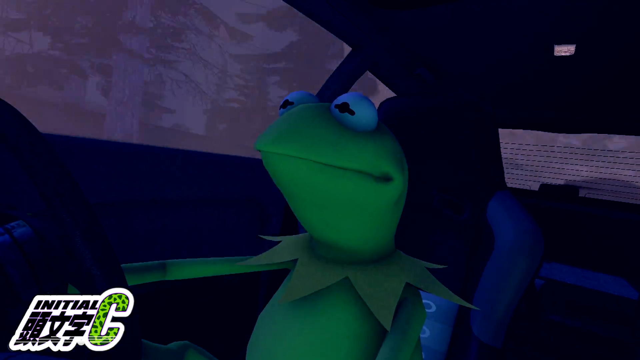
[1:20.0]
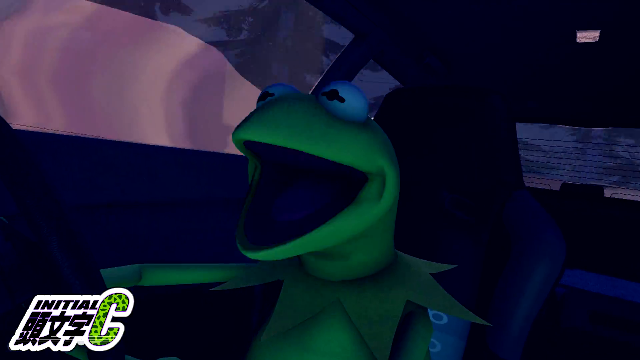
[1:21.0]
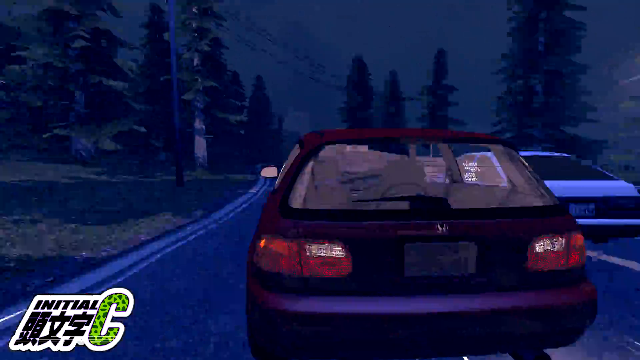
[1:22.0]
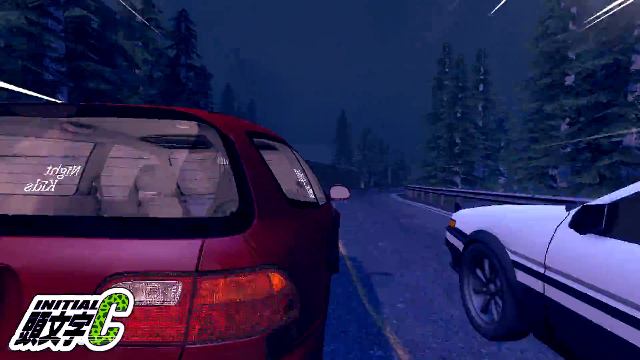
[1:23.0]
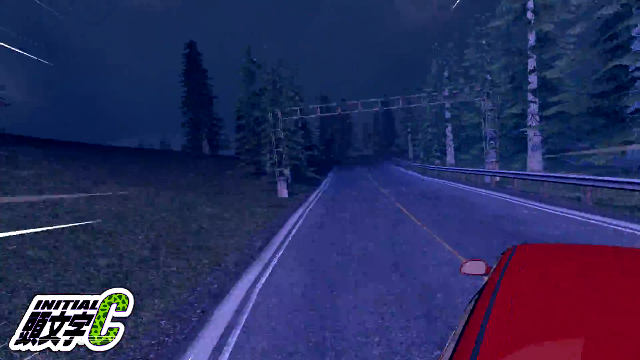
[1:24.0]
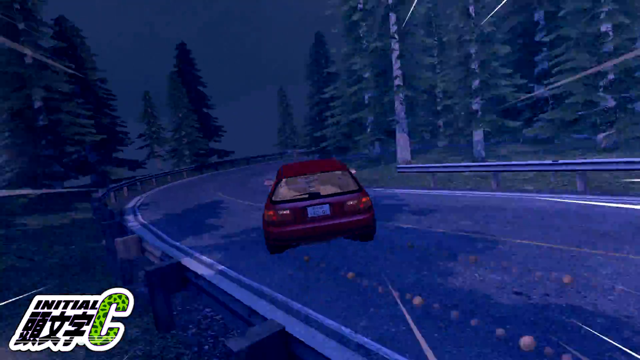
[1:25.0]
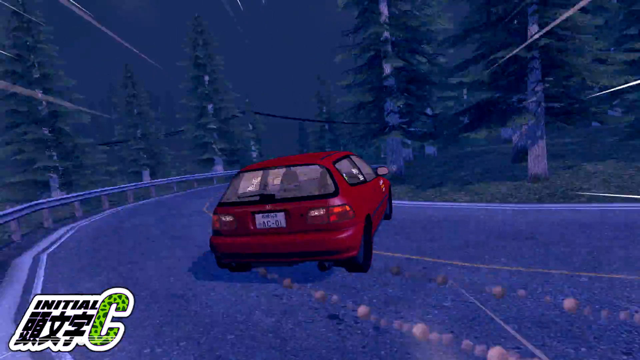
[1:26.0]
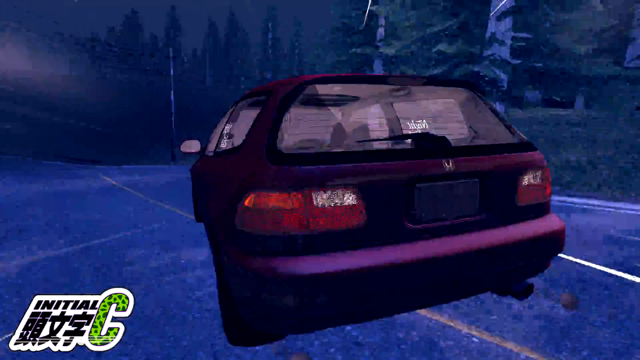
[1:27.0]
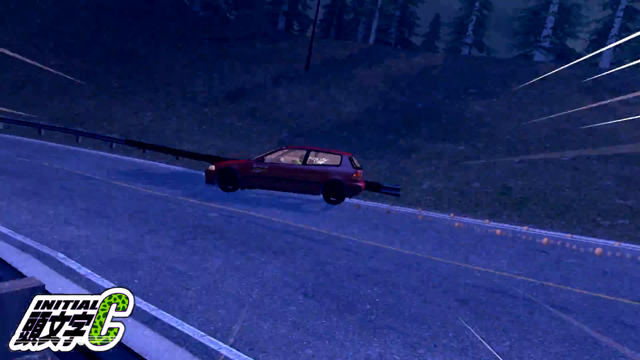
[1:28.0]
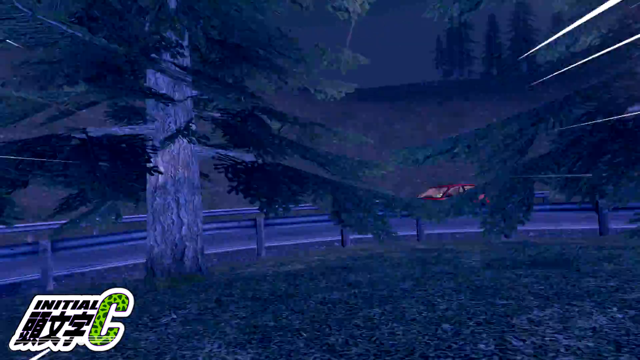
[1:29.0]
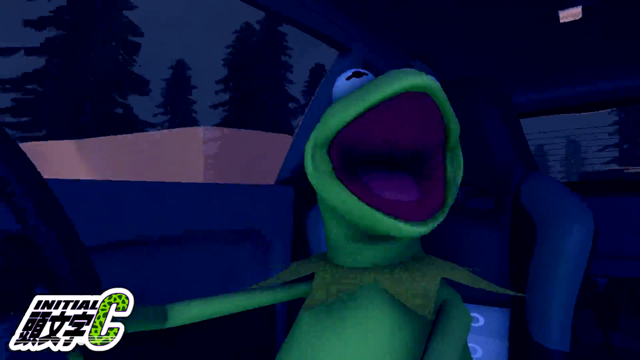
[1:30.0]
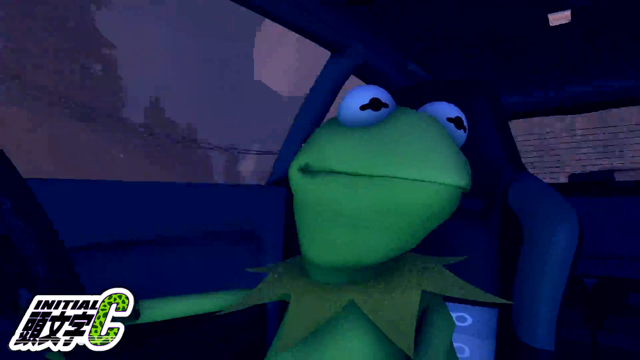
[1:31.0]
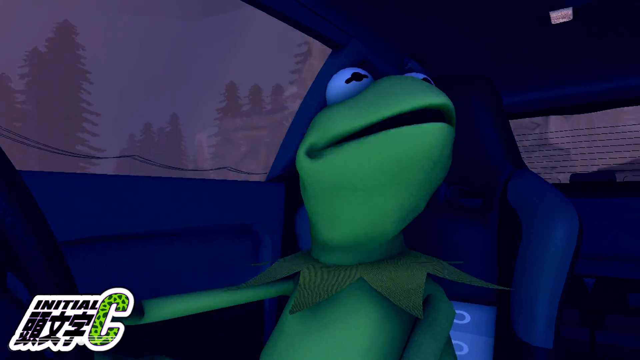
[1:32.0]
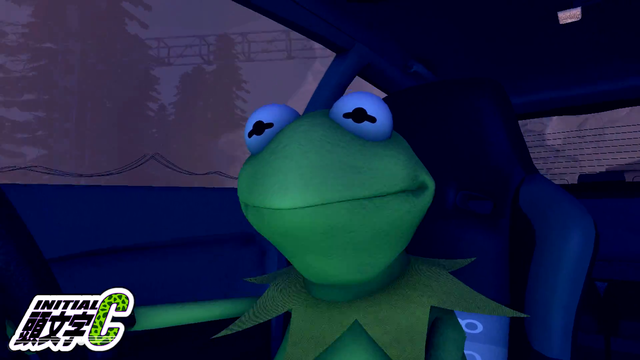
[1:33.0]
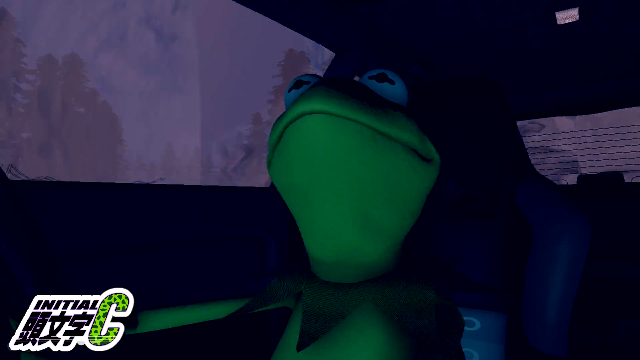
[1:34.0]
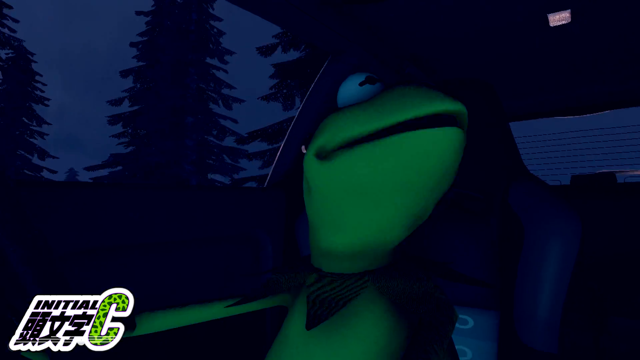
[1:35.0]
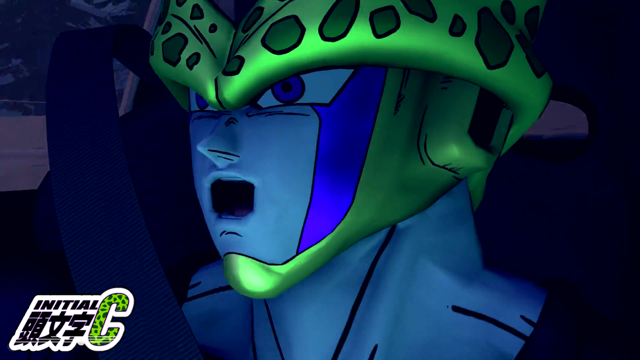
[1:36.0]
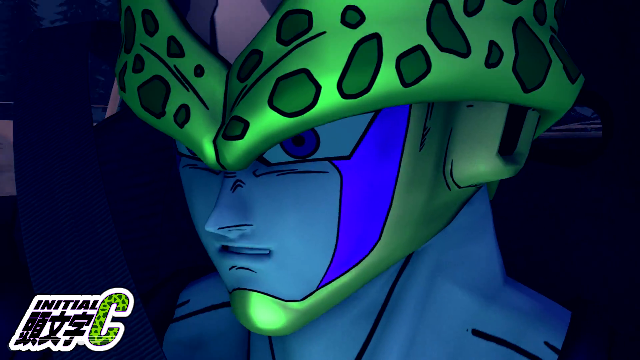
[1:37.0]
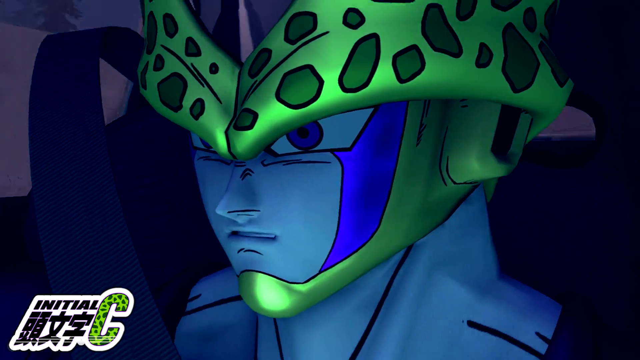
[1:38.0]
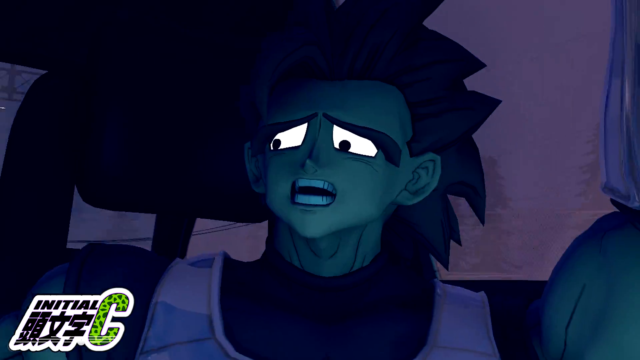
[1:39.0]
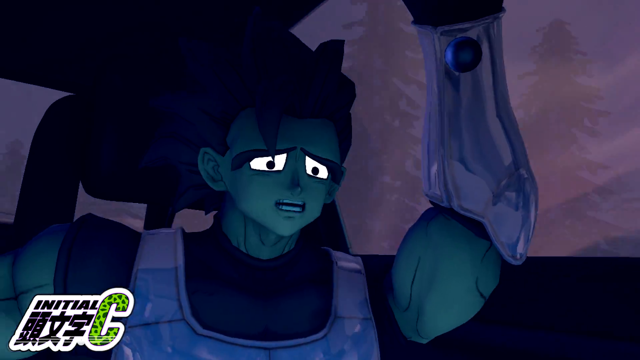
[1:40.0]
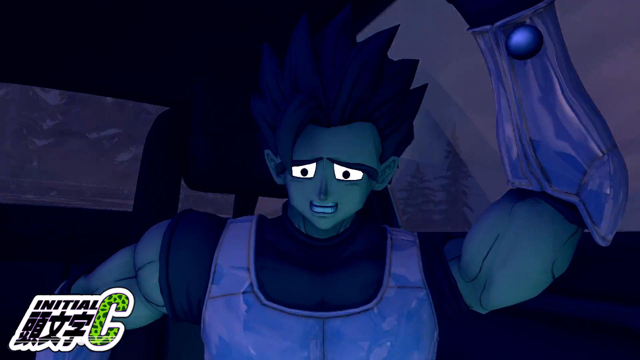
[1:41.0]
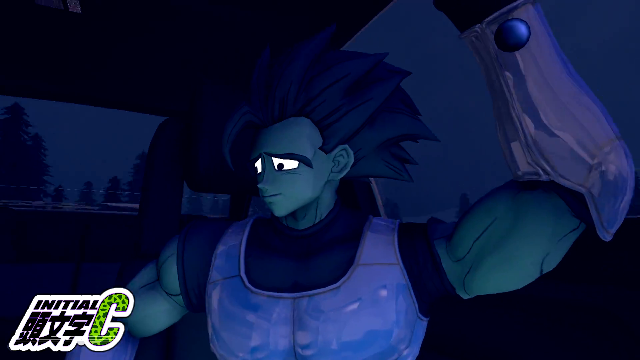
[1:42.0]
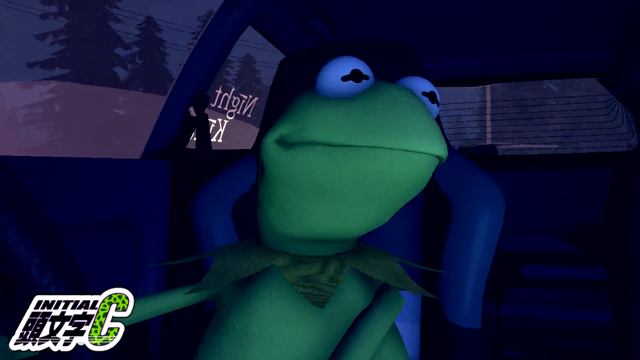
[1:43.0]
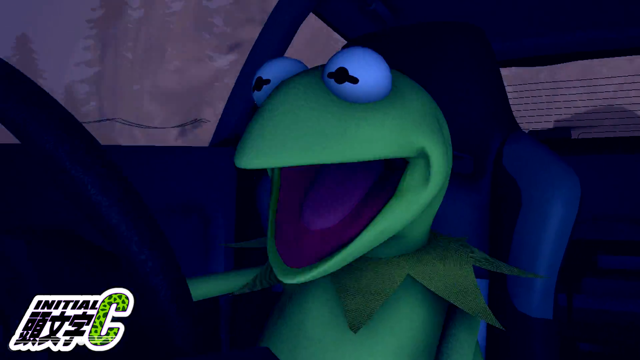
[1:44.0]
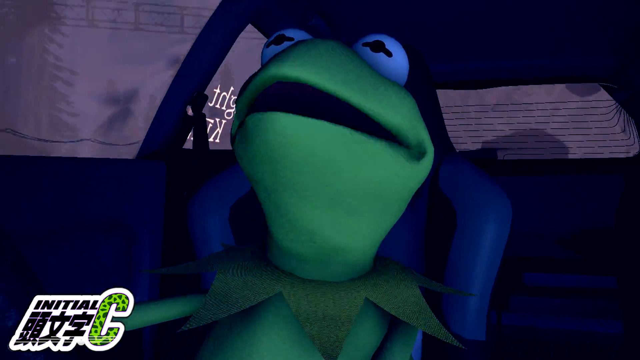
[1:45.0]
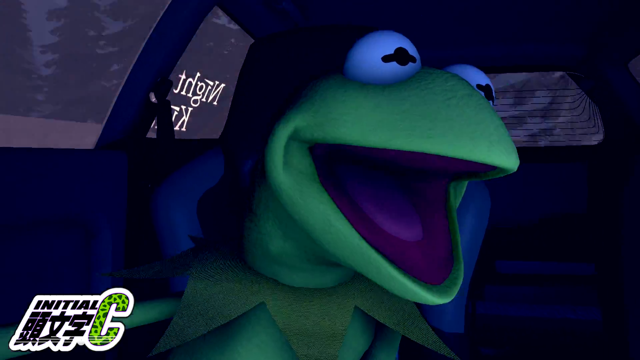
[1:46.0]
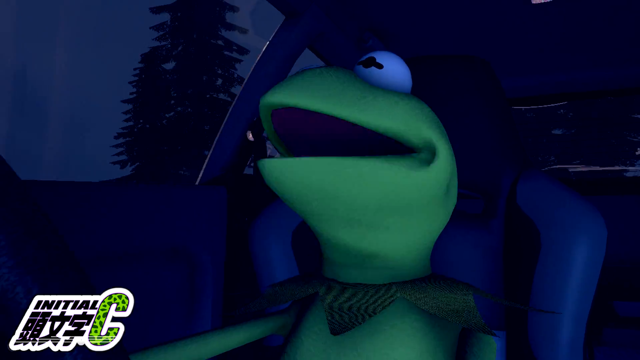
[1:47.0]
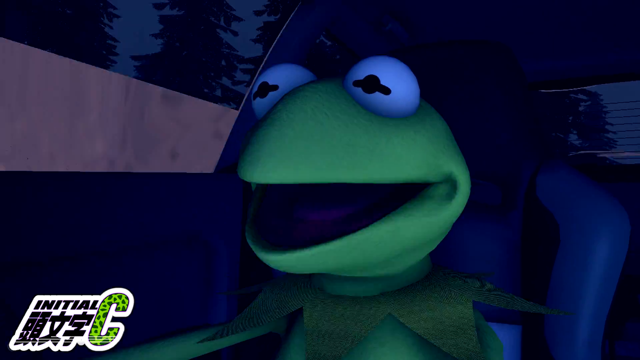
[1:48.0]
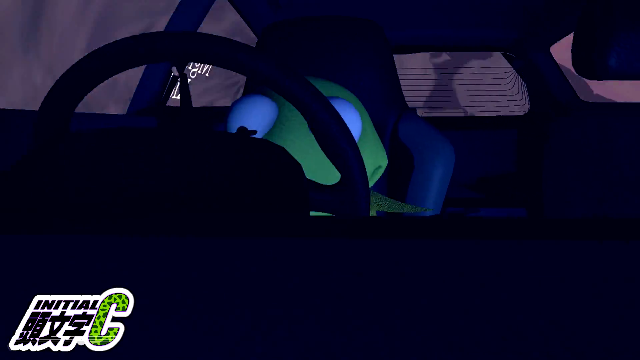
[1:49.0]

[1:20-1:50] Kermit the Frog is talking, apparently cursing at the characters who were beating him, and he seems to be gaining on them and pulls slightly ahead. His red car has a sticker that says "special". The Dragon Ball characters look really worried and very anxious as they swerve around curves and corners while Kermit beats them; he may be gloating. He seems to have some sort of cheat method in his car, or possibly just gets a sudden burst of speed. The Goku character looks really worried about losing or having an accident.